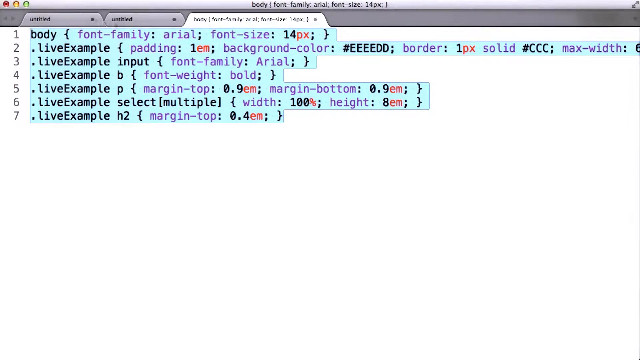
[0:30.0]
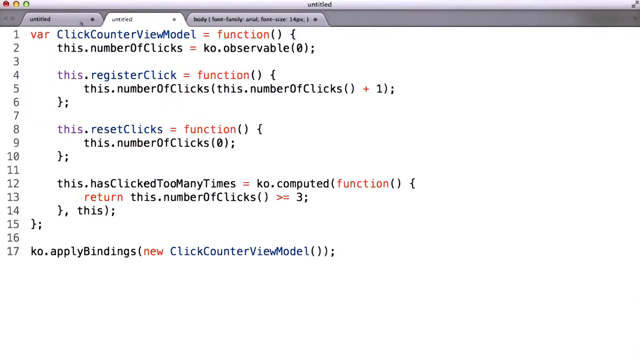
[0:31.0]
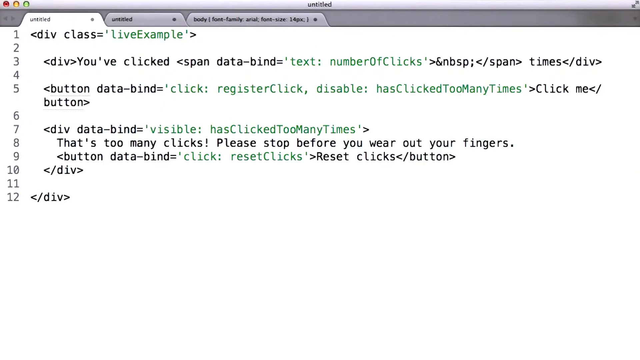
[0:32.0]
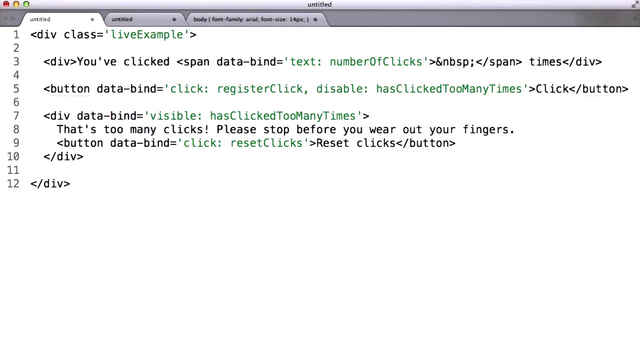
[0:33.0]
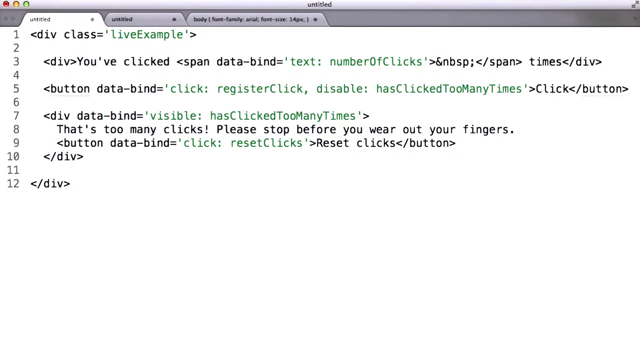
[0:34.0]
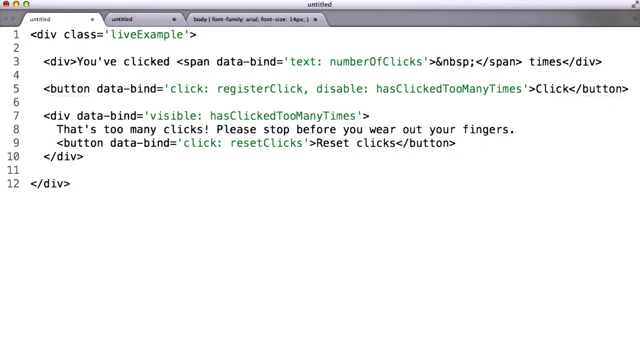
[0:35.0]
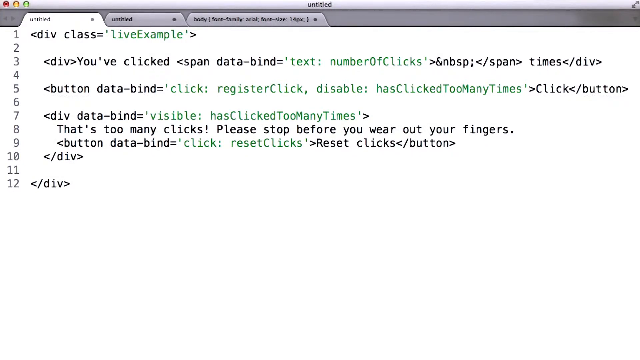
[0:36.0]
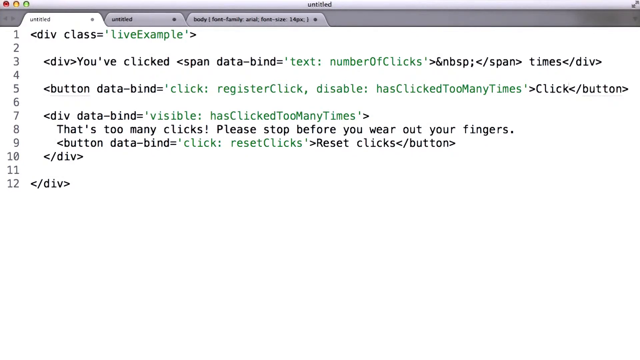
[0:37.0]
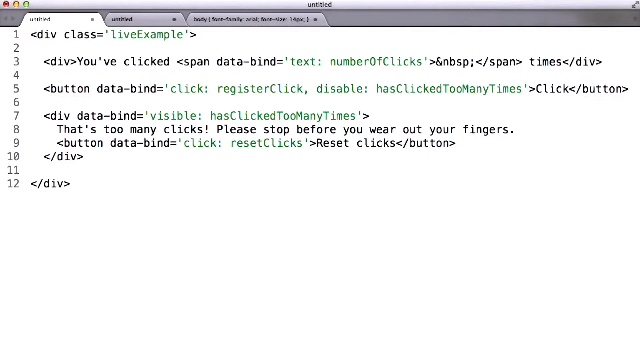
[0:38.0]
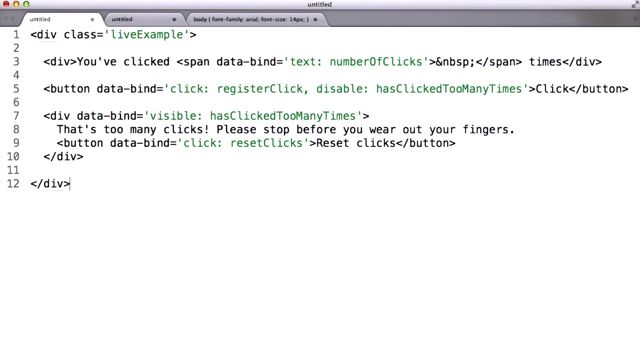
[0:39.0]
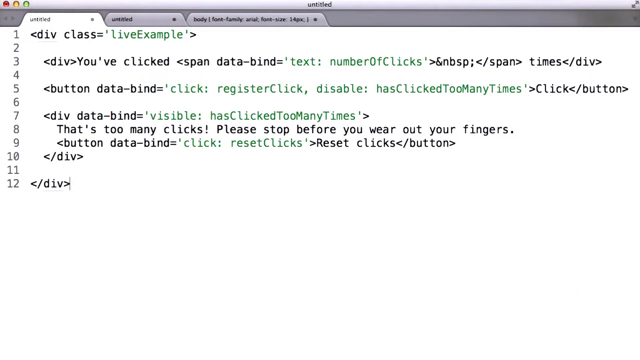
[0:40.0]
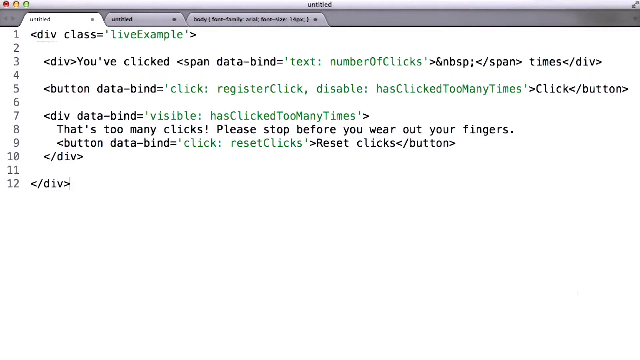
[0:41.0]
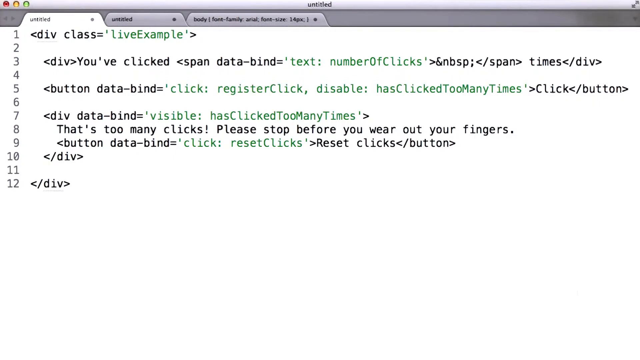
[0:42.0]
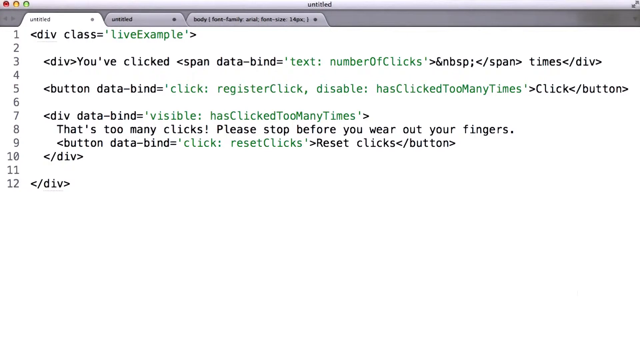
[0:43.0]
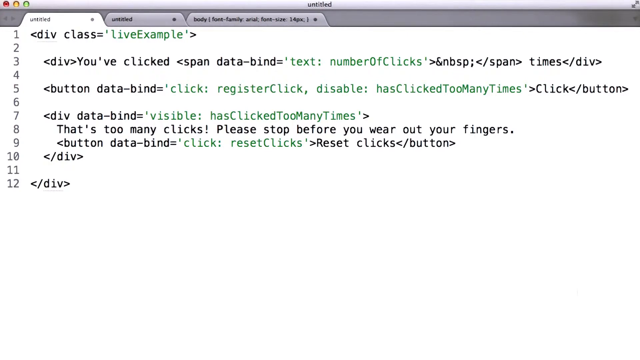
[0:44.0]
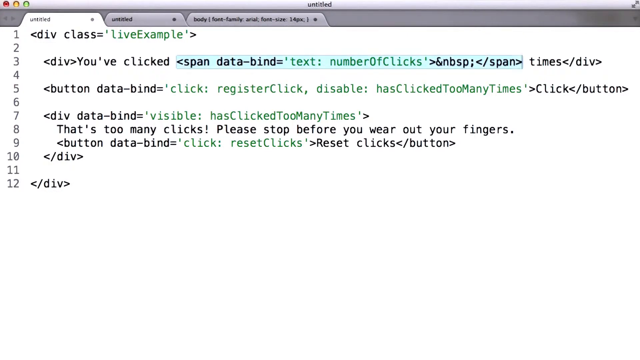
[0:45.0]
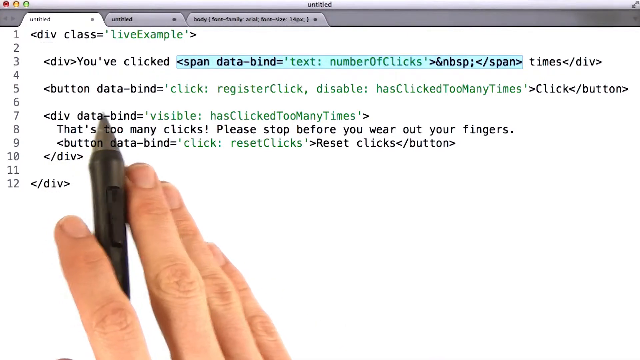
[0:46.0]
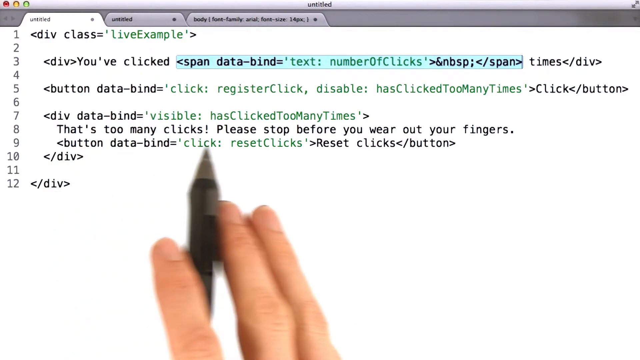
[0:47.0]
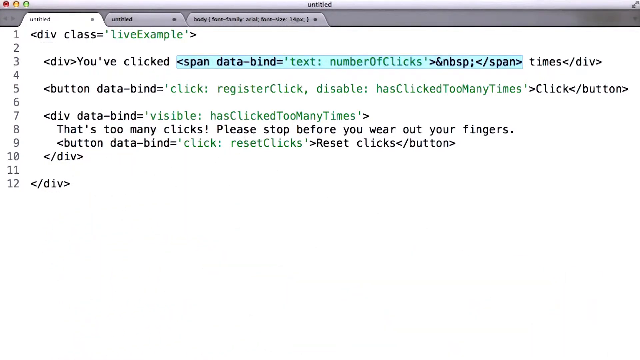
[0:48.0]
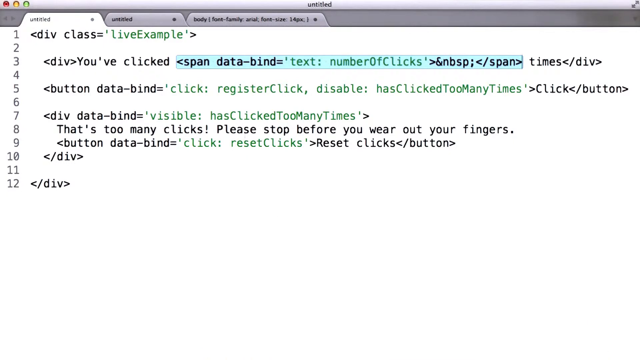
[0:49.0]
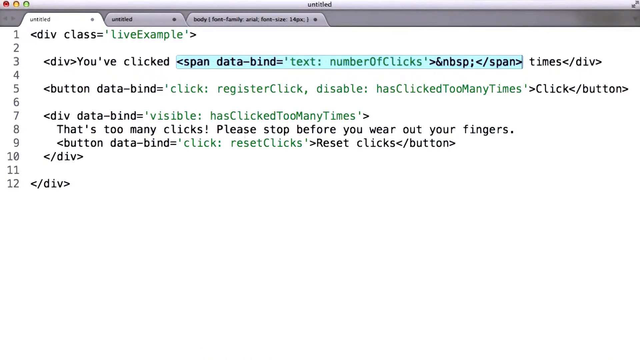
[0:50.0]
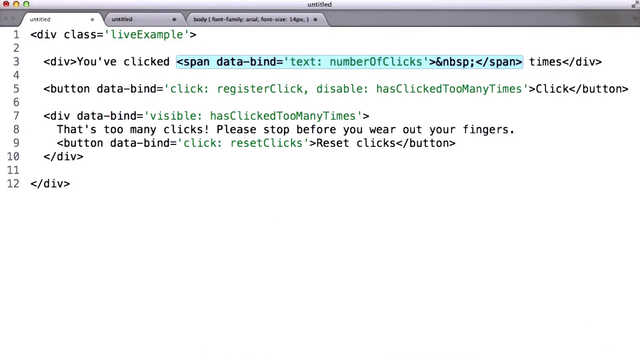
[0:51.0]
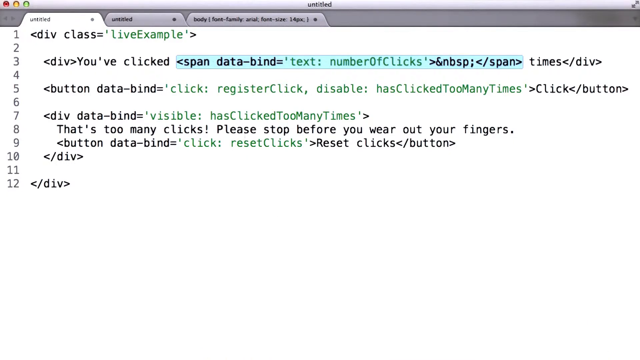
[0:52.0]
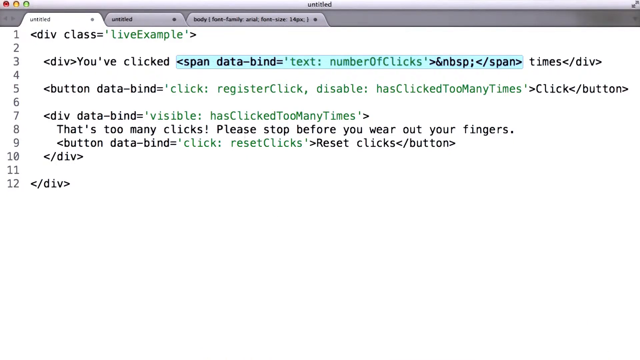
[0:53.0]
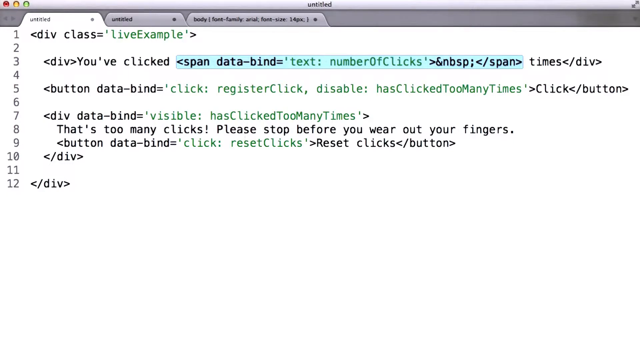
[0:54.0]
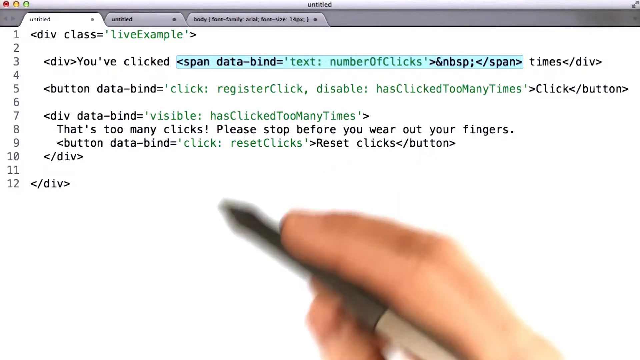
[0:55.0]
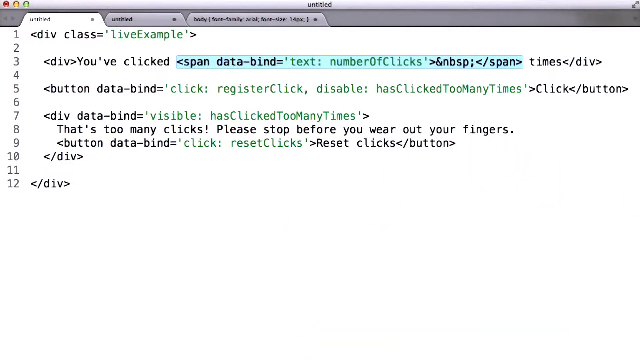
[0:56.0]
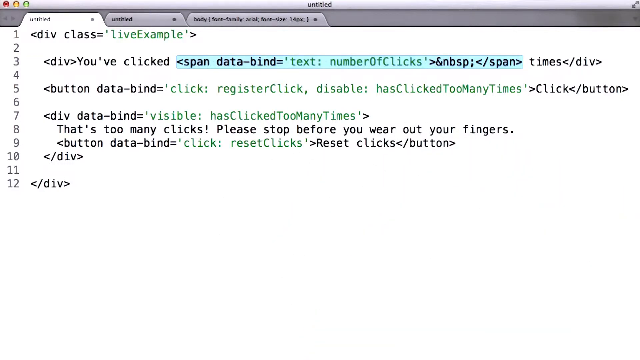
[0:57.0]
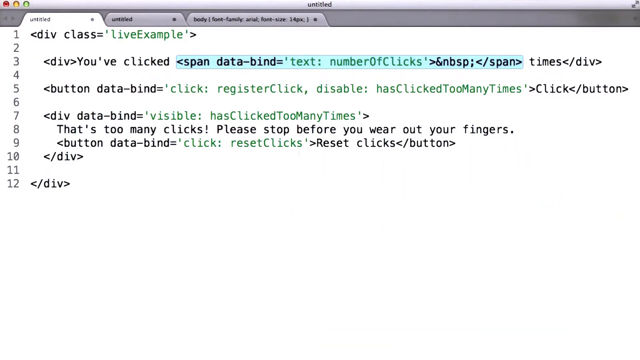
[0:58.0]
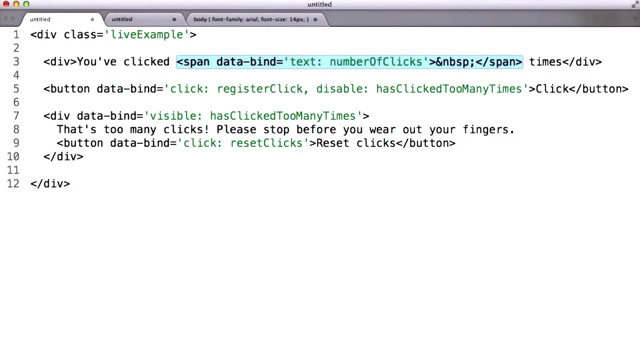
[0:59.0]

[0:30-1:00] The font settings remain visible, then an untitled page shows code: "click counter view model = function", "this.number of clicks = observable", "this.register click = function", "this.reset clicks = function", "has clicked too many times", "return" and "ko.apply bindings". This appears to be instructions for what happens when a button on the website is clicked. Another untitled page shows "div class = live example", "You've clicked", "number of clicks" and "visible: has clicked too many times", the code that creates the too-many-clicks message. A hand appears holding a pen, and the pen points to some data. Other text includes "click", "reset clicks", "Reset clicks" button, "live example", "select multiple" and "margin-top".